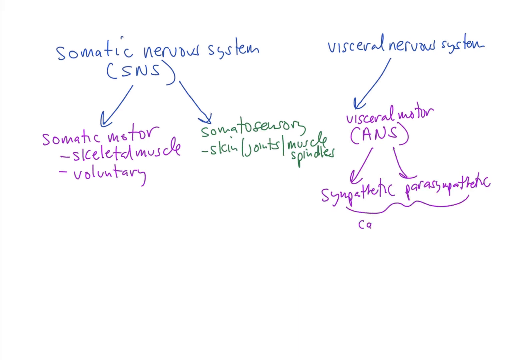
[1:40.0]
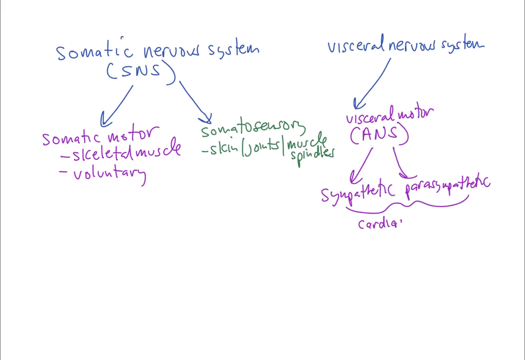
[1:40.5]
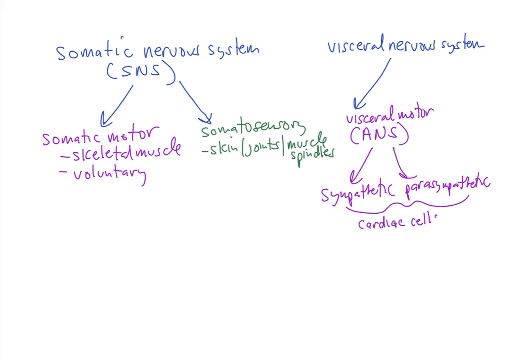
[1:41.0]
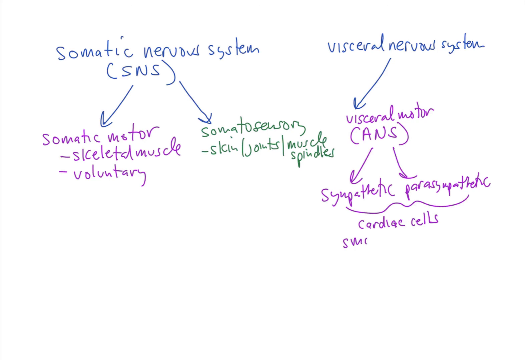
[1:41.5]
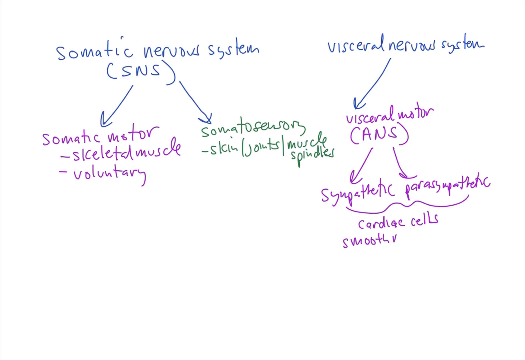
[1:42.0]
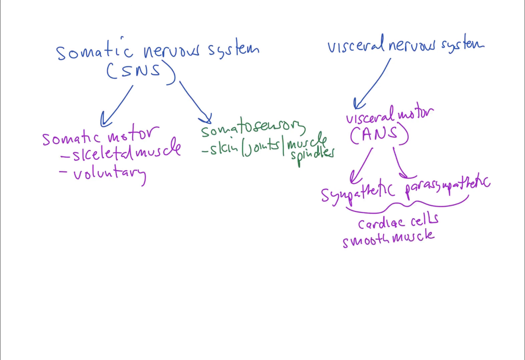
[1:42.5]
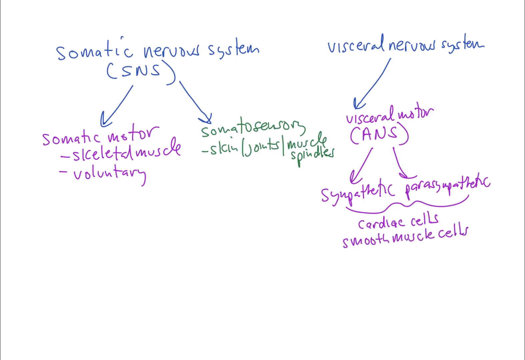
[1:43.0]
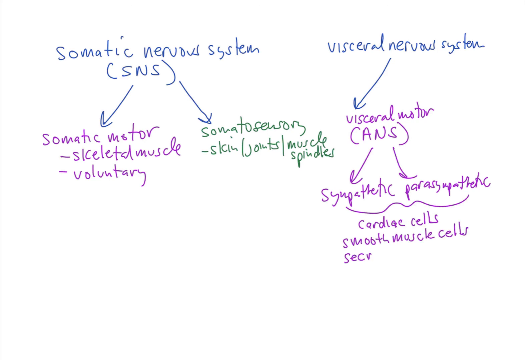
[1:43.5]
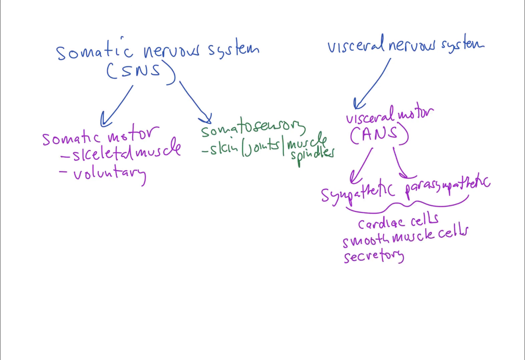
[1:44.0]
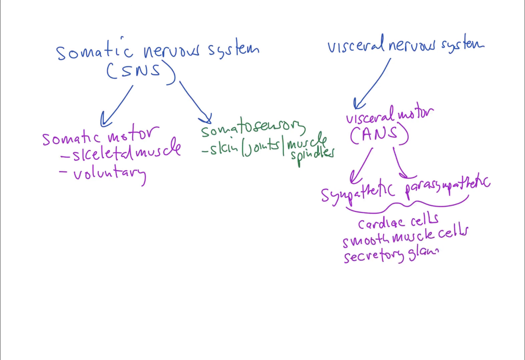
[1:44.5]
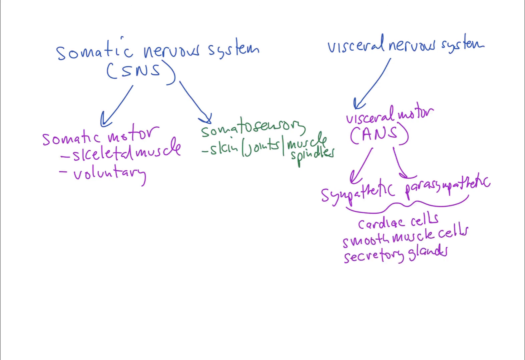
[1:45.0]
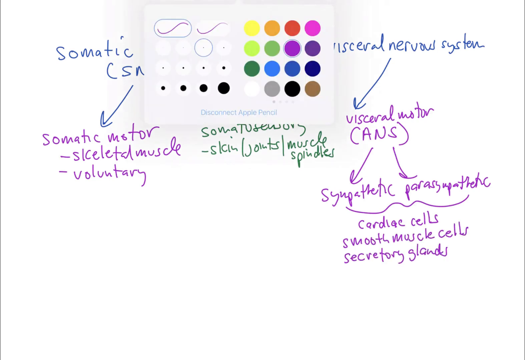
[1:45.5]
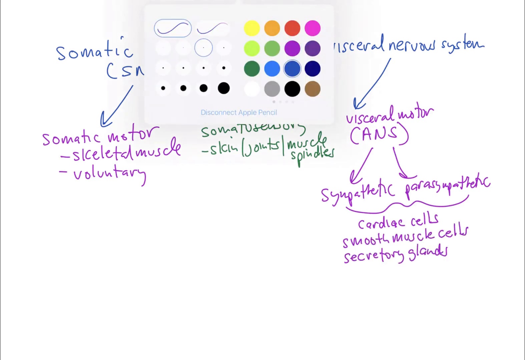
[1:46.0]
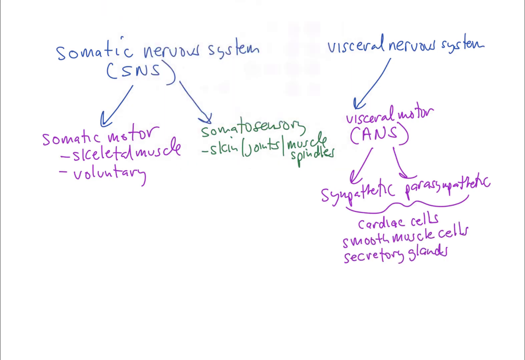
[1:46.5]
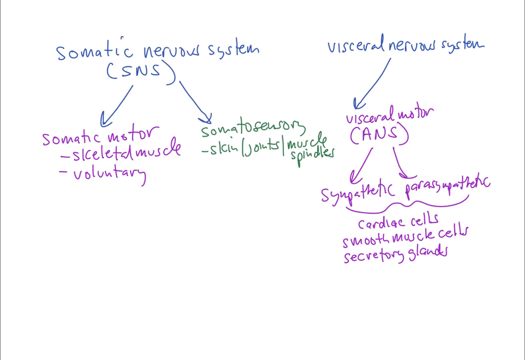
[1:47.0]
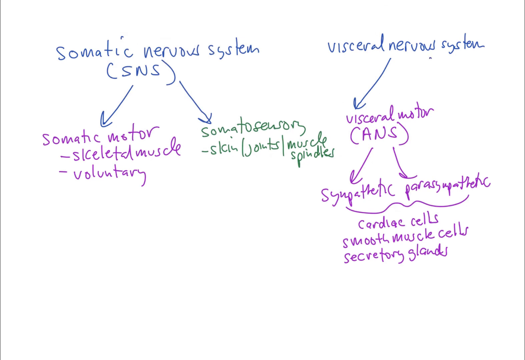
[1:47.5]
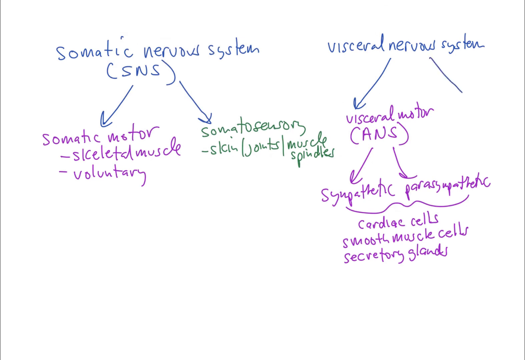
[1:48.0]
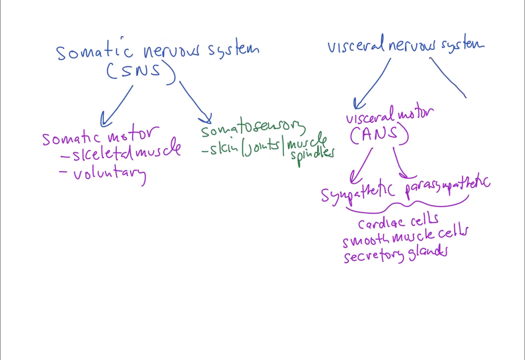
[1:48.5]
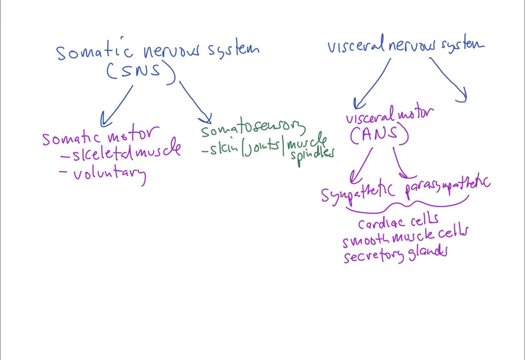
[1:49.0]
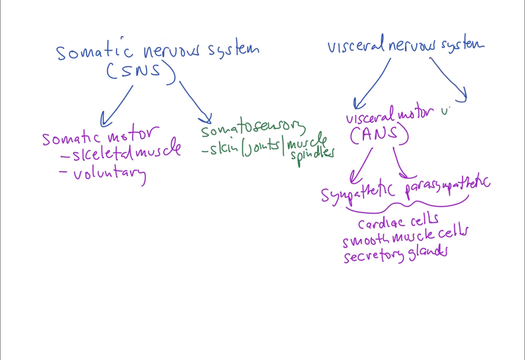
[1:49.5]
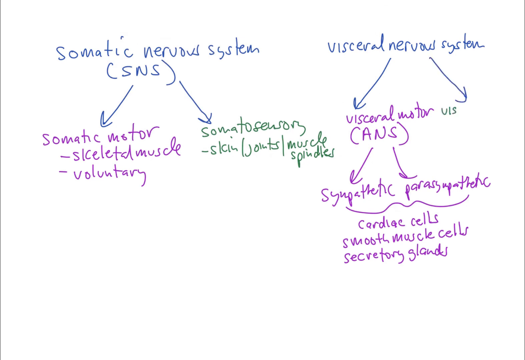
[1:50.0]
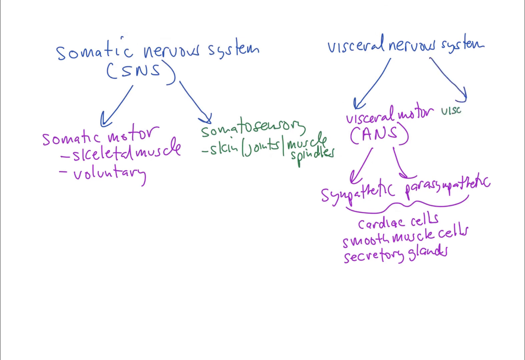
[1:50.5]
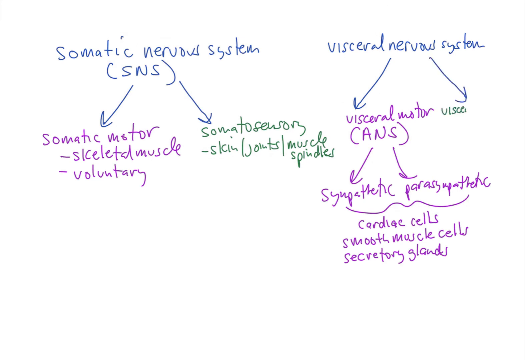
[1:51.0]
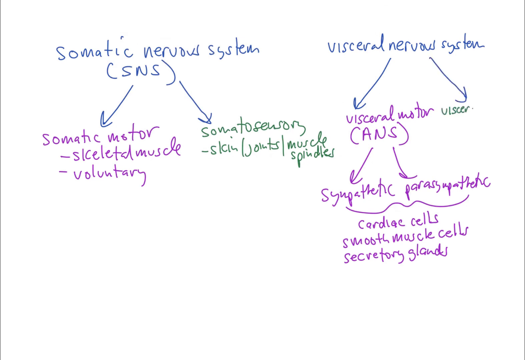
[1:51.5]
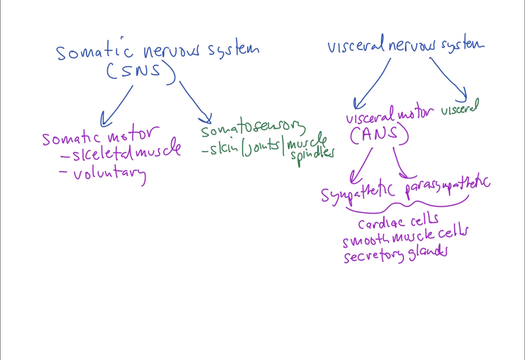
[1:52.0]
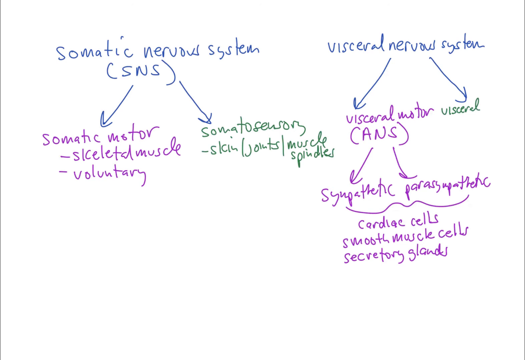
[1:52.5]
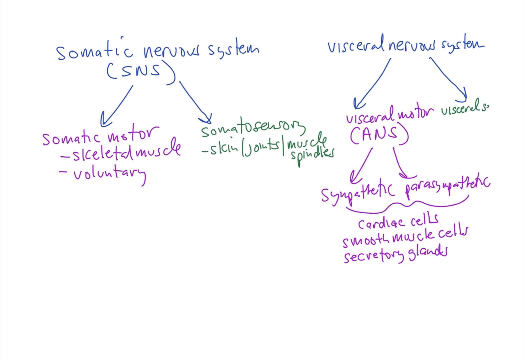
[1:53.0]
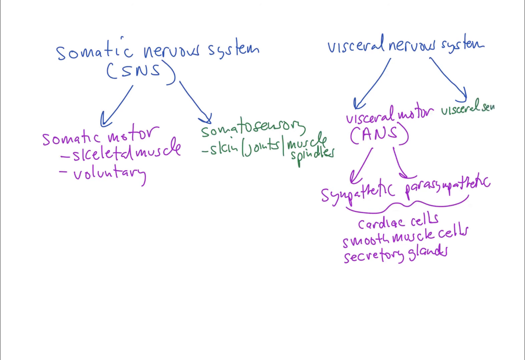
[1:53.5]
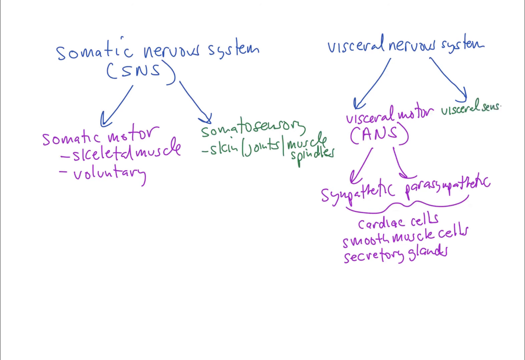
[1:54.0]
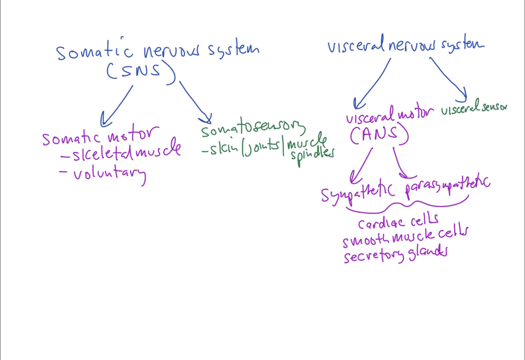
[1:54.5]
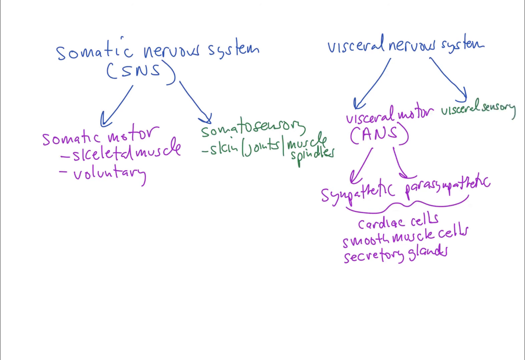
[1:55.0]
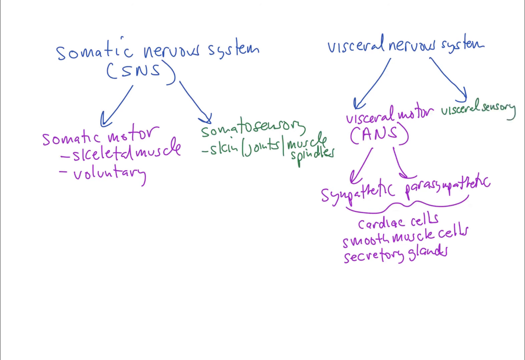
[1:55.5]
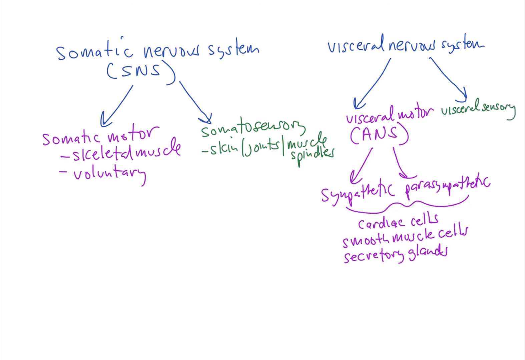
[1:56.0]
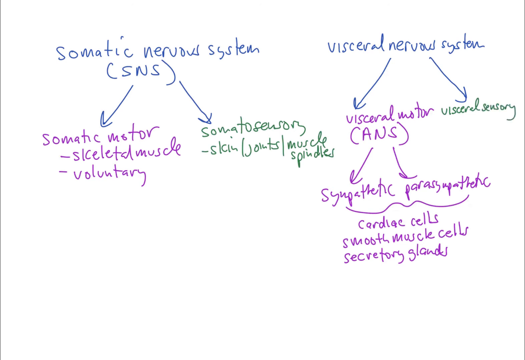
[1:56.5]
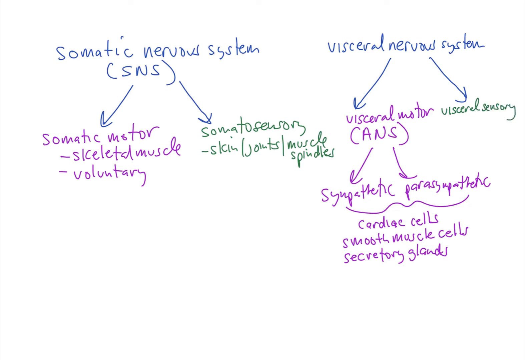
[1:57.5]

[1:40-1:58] The purple squiggly bracket connecting "sympathetic" and "parasympathetic" on the right-hand side of the screen is finished, and underneath it the text reads "cardiac cells, smooth muscle cells, and secretory glands". The creator brings up a menu in the top portion of the screen where different font colours are visible, then writes "visceral sensory" in green text to the right of visceral motor, near the right edge of the screen. The final view shows a white background with blue, green and purple text and many arrows, seemingly dividing the nervous system into subsections. All the text is handwritten, seemingly on a tablet or drawing pad, and mostly lowercase letters are used except for acronyms, which are in all capital letters.